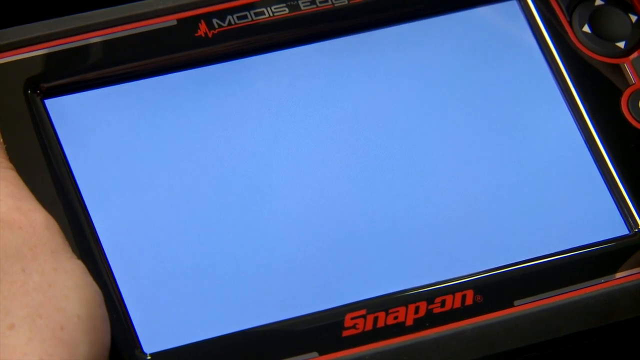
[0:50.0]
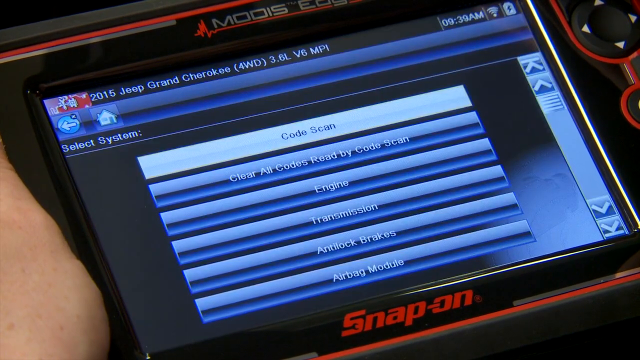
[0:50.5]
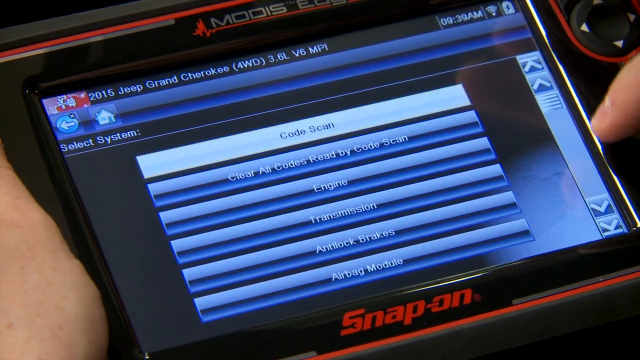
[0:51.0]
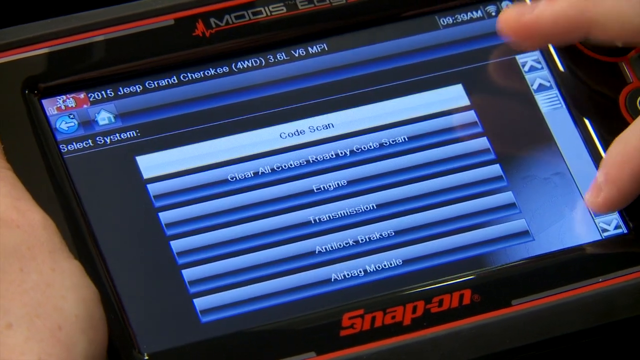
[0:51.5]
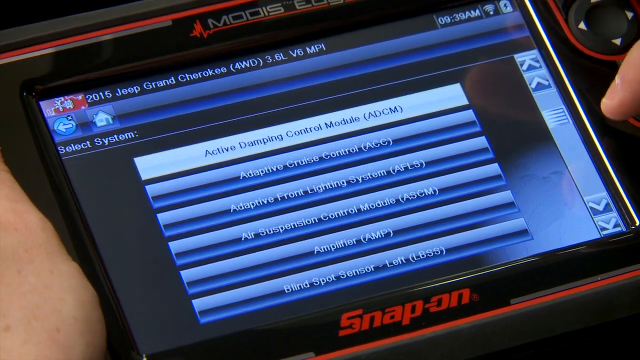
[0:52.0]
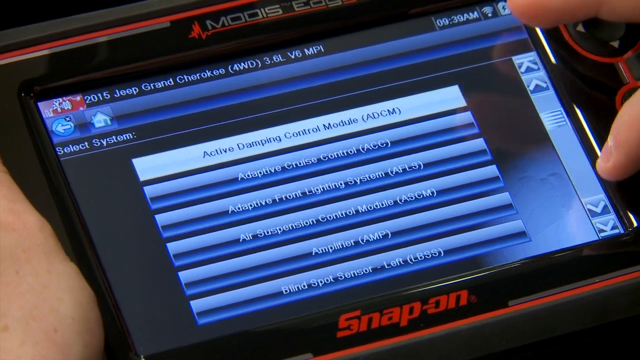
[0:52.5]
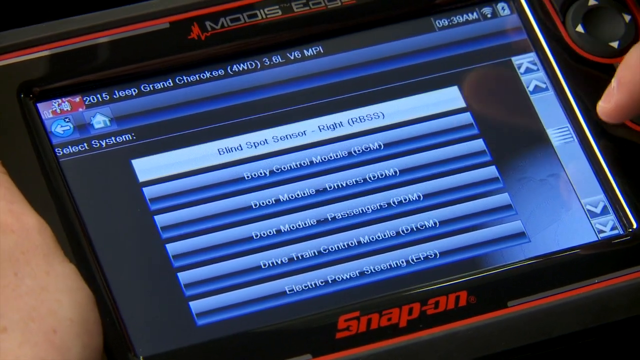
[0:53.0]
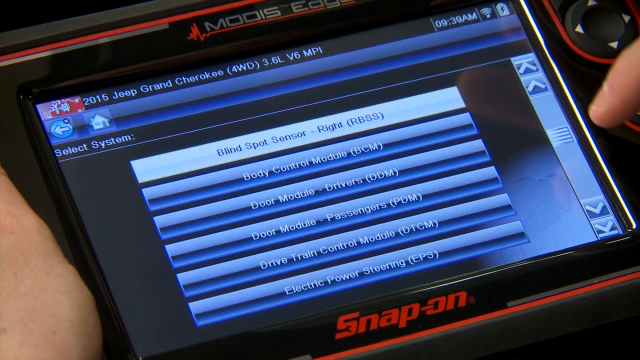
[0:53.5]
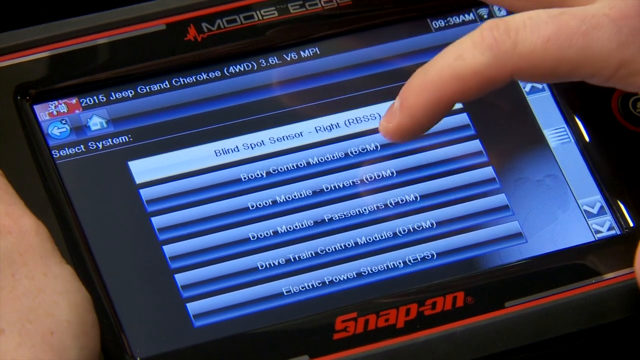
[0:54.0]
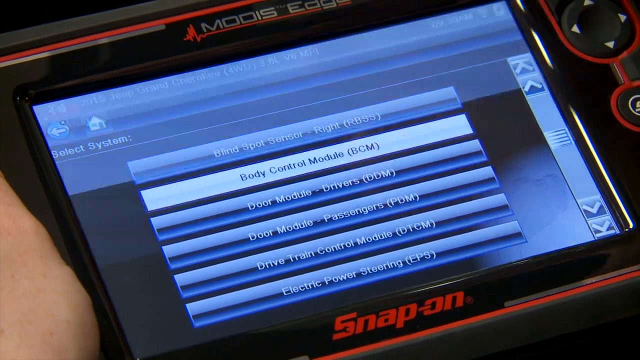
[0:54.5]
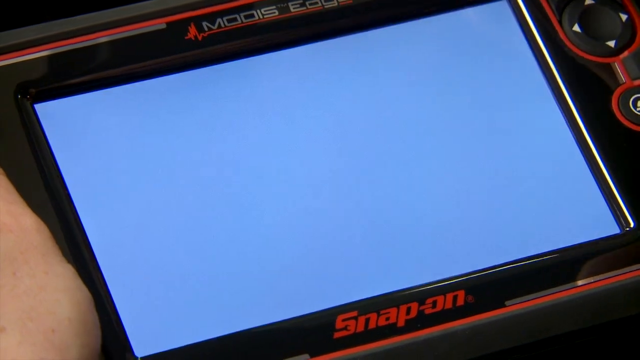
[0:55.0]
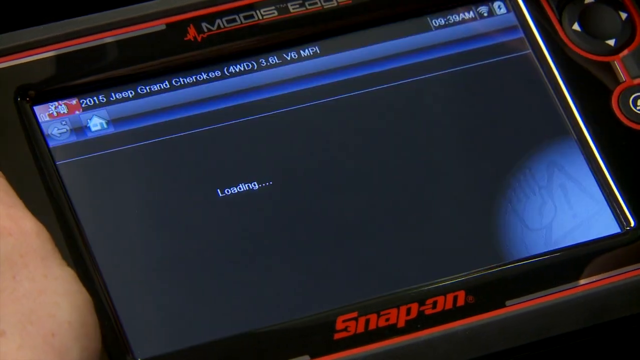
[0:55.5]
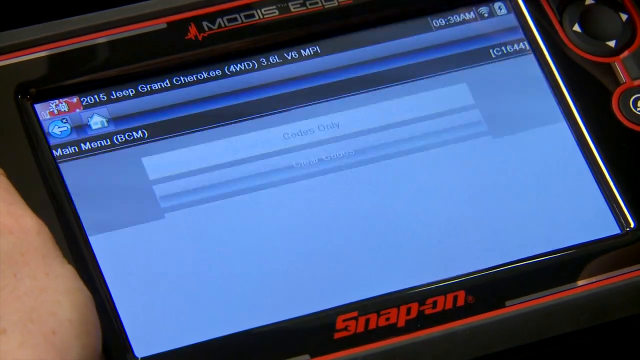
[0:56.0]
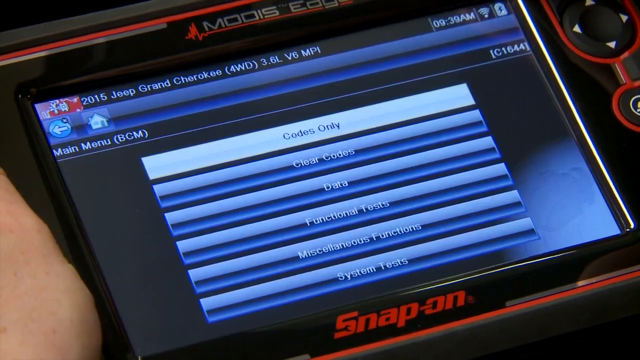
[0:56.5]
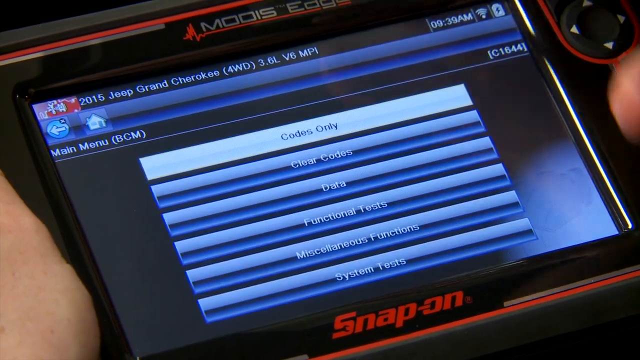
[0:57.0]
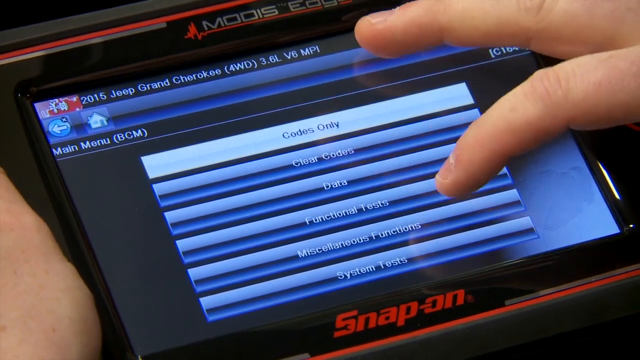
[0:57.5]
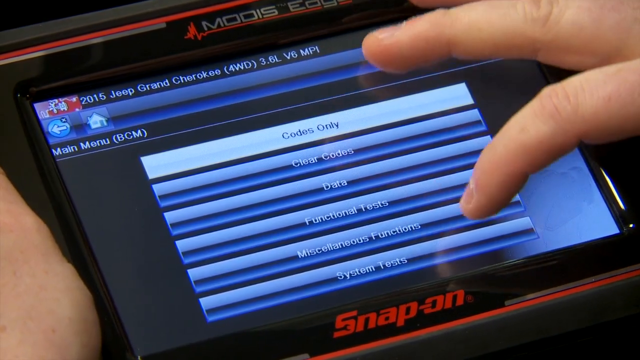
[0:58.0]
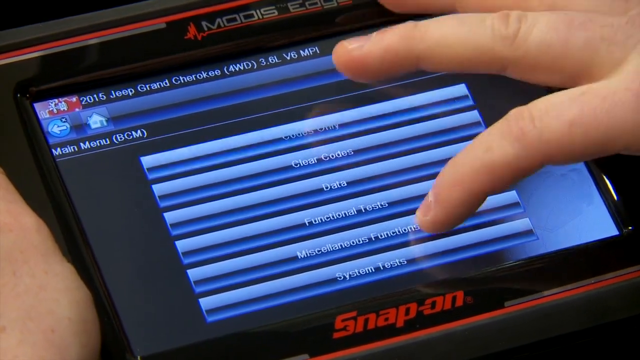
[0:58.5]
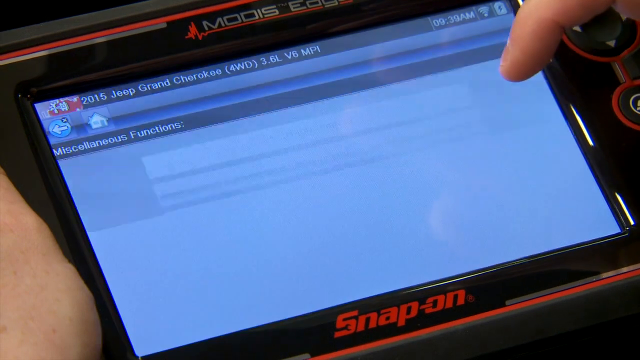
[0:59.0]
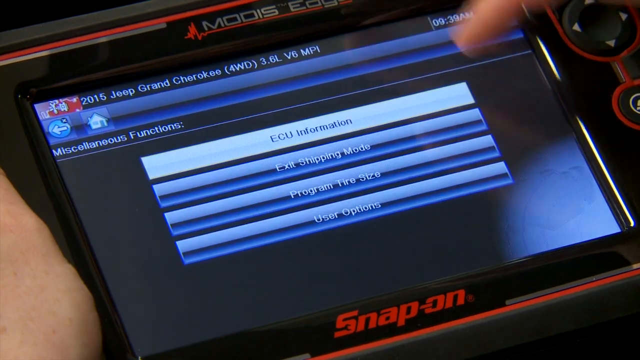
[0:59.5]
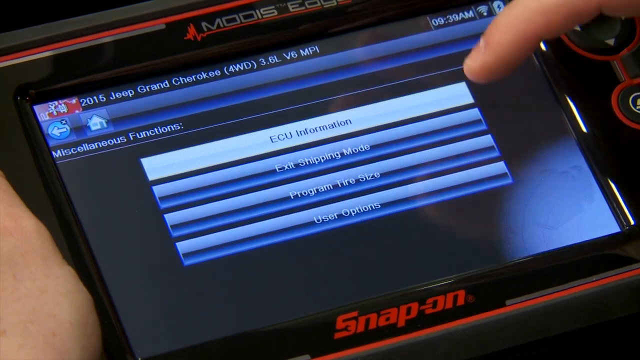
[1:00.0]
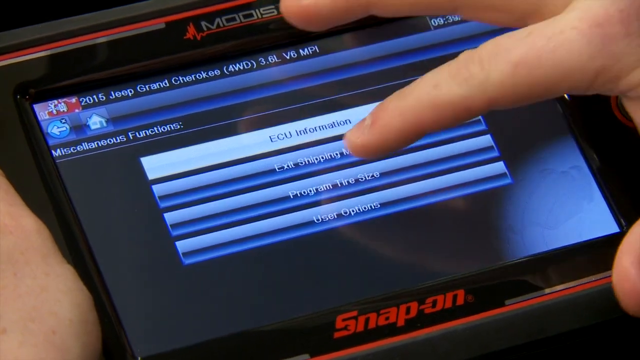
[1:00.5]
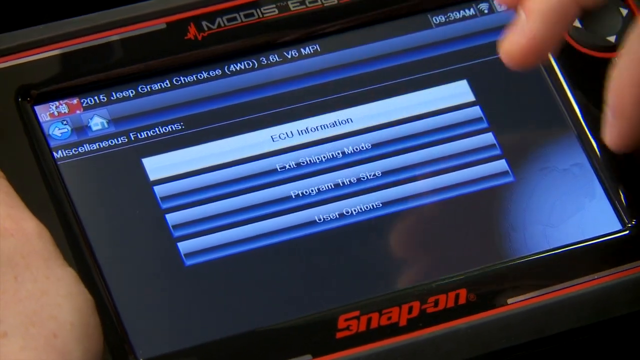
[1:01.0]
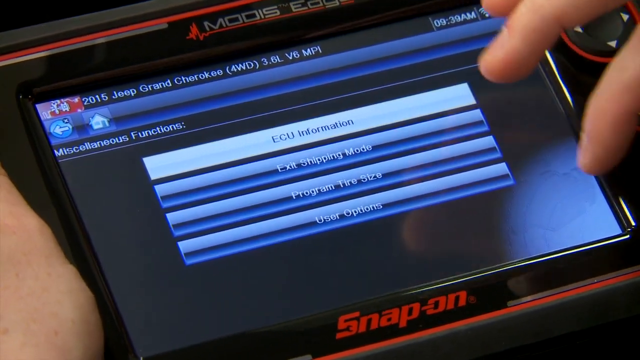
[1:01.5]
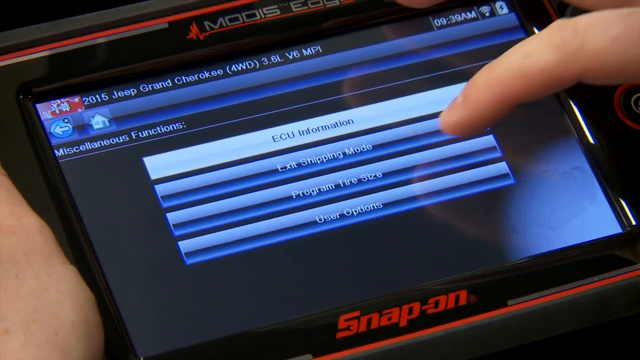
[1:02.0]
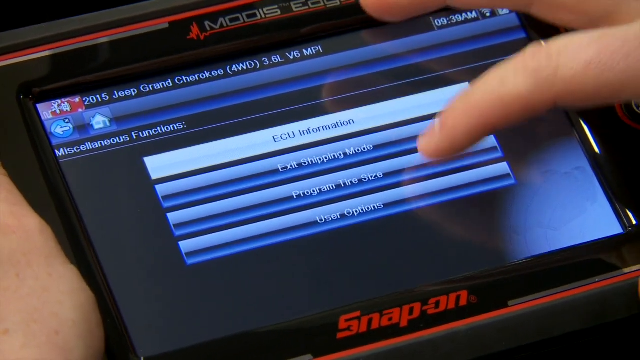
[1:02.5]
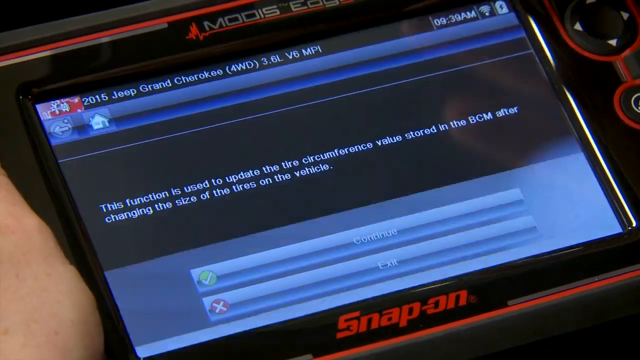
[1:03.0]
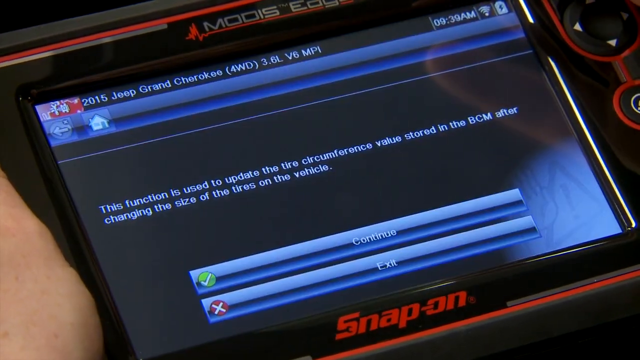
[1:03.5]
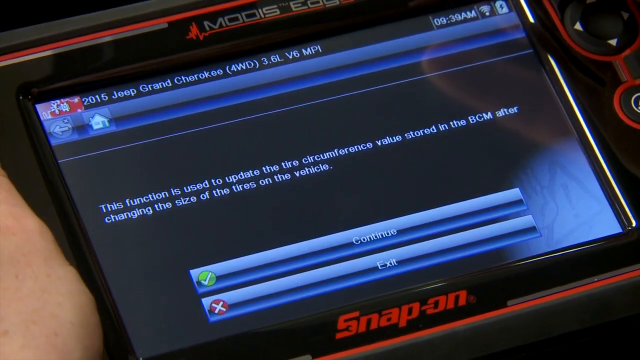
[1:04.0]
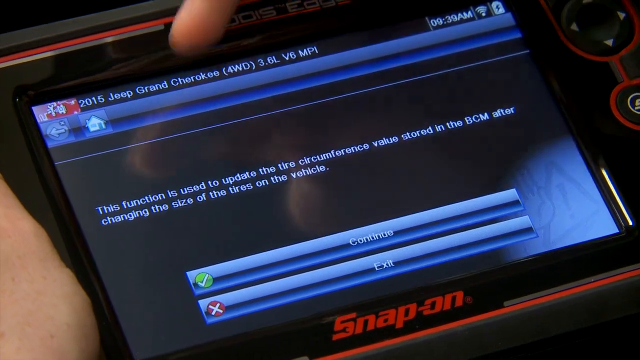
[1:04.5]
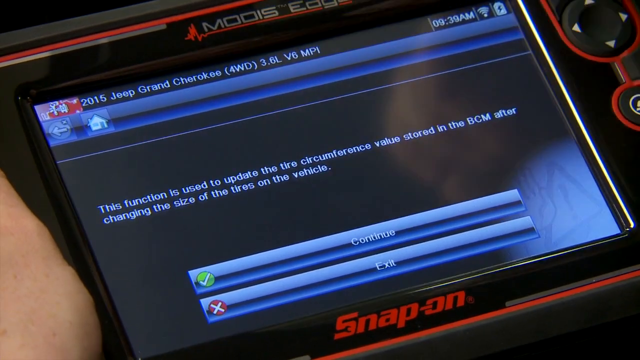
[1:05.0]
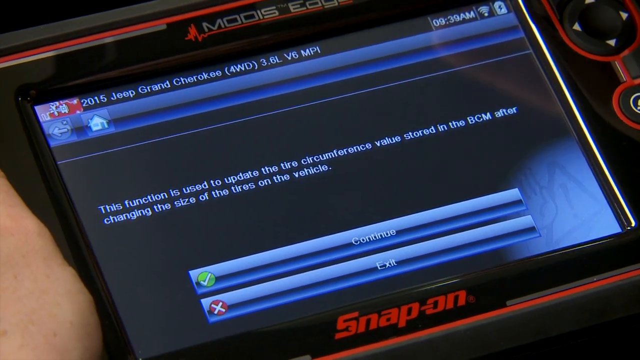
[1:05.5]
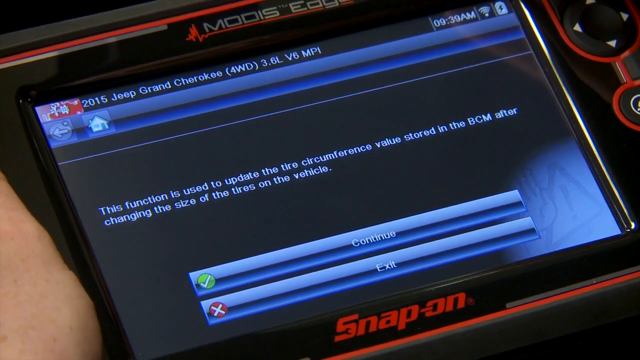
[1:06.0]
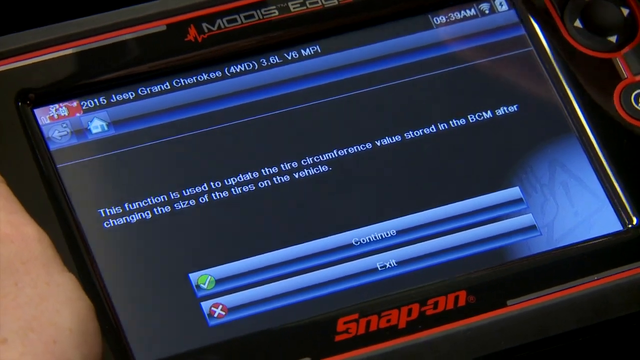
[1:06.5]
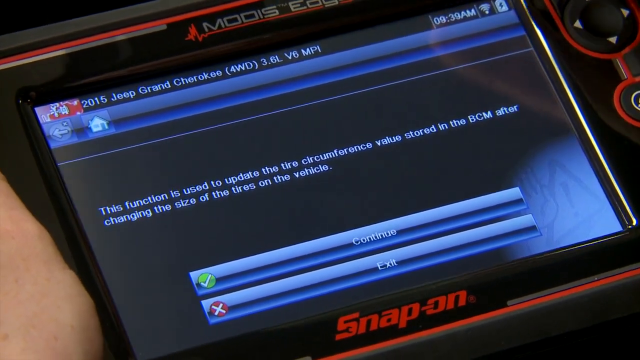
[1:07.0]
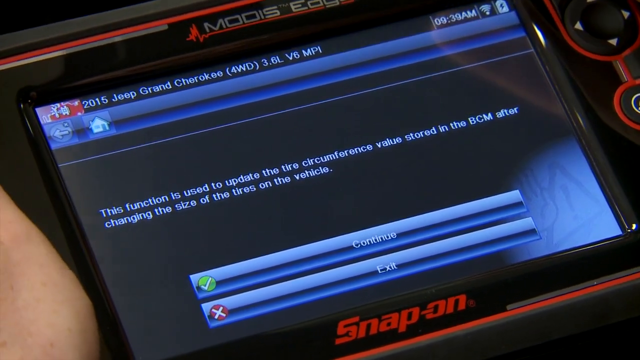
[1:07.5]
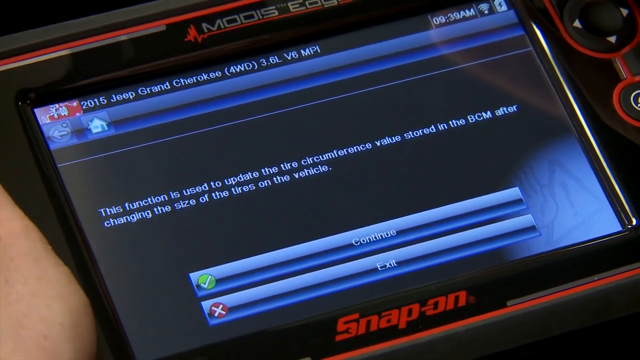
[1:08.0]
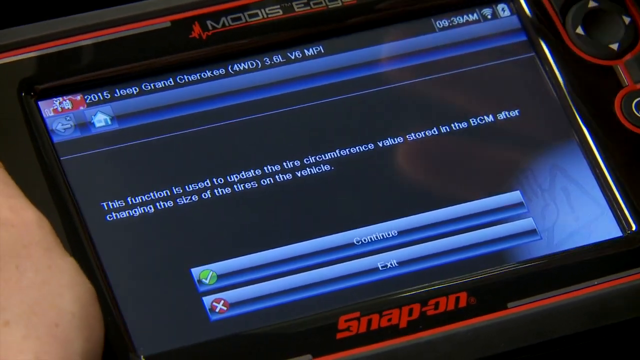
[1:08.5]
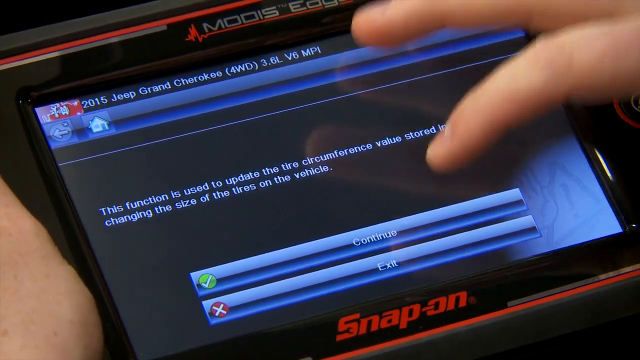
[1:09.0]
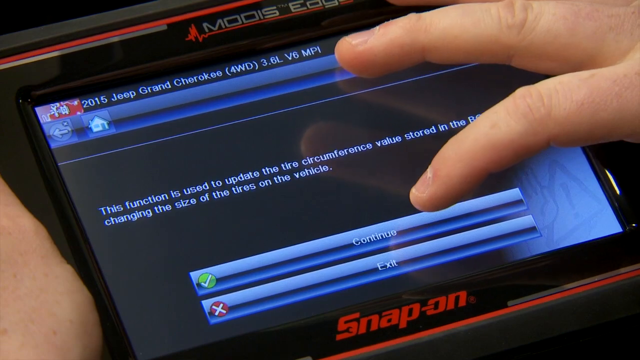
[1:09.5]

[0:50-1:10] He scrolls through a menu with many options and taps "body control module", then "miscellaneous functions", then "program tire size." A screen offers the option to continue or exit and reads "this function is used to update the tire circumference value stored in the BCM after changing the size of the tires on the vehicle." Much more information is visible, including a time of 9:39 a.m. and the vehicle model, a 2015 Jeep Grand Cherokee four-wheel drive 3.6 litre V6. He stays on that screen for a while, possibly explaining it, then taps continue.